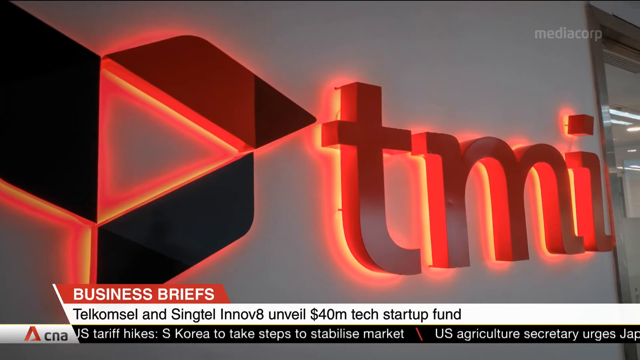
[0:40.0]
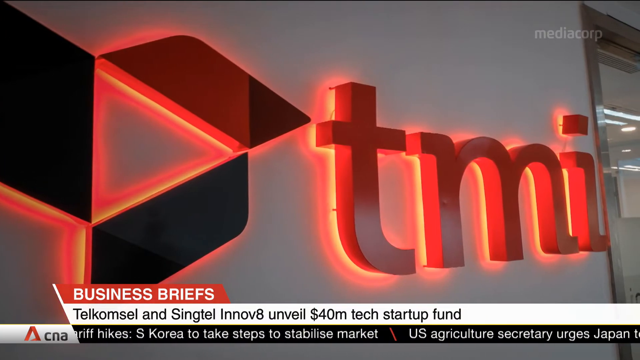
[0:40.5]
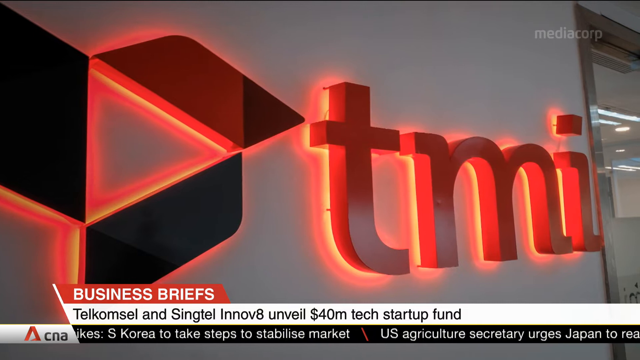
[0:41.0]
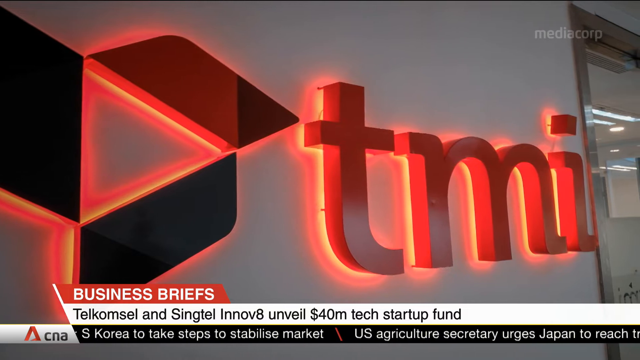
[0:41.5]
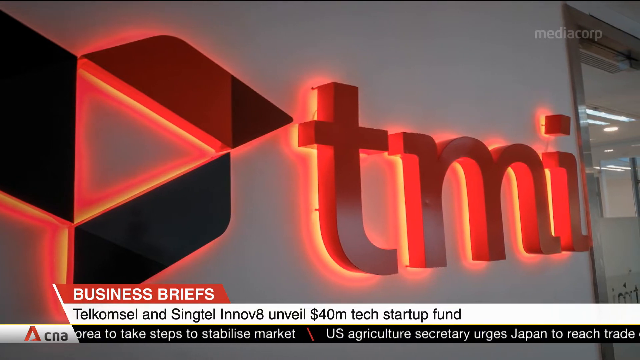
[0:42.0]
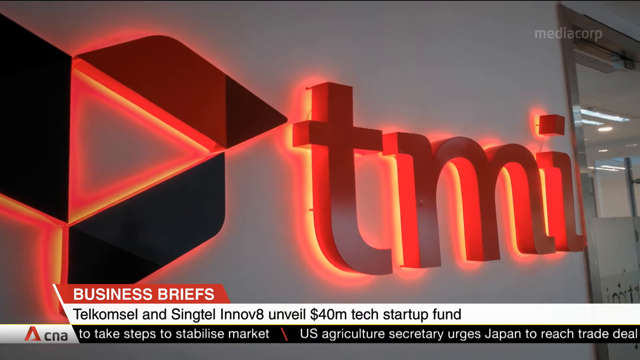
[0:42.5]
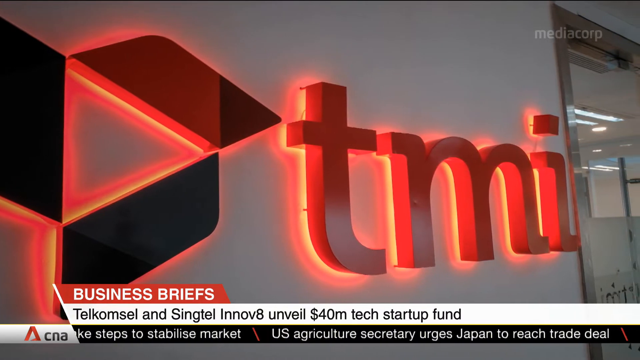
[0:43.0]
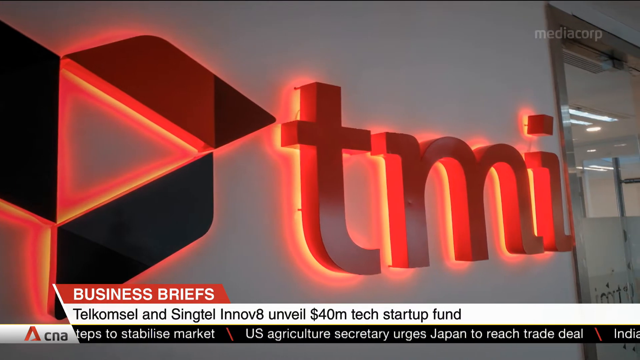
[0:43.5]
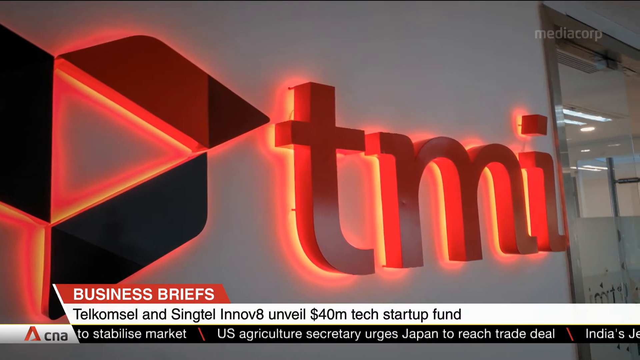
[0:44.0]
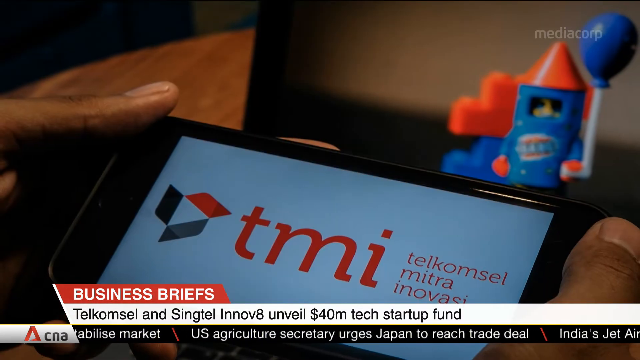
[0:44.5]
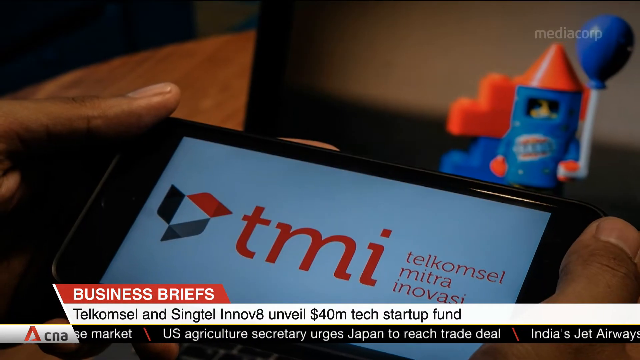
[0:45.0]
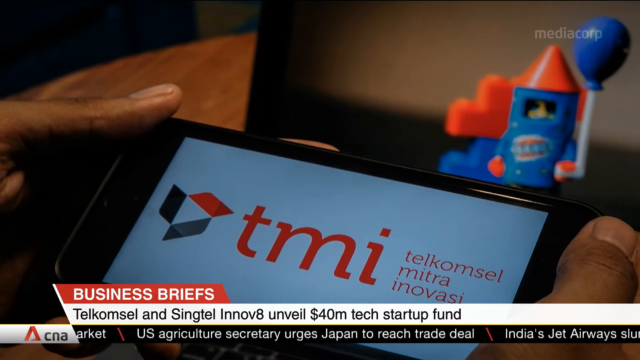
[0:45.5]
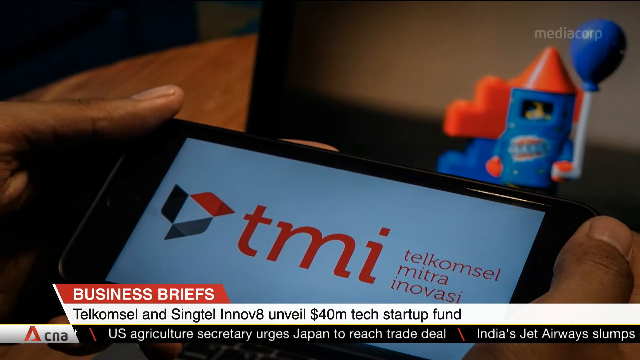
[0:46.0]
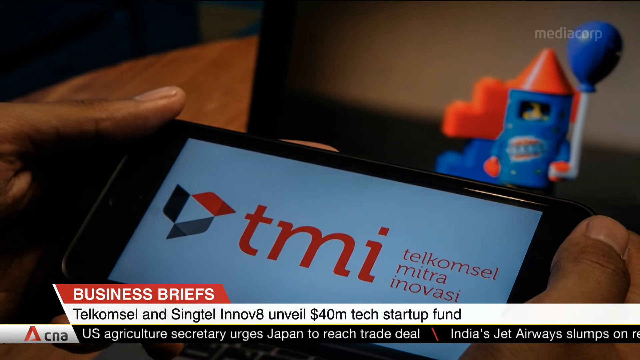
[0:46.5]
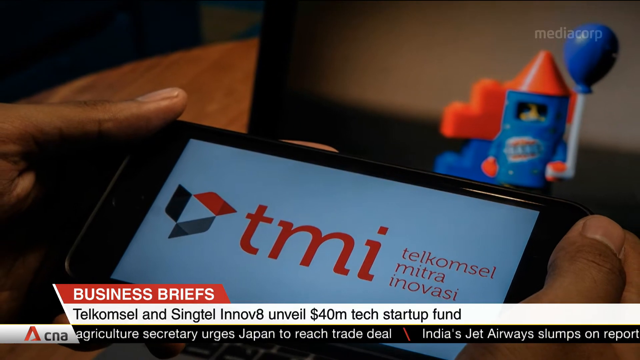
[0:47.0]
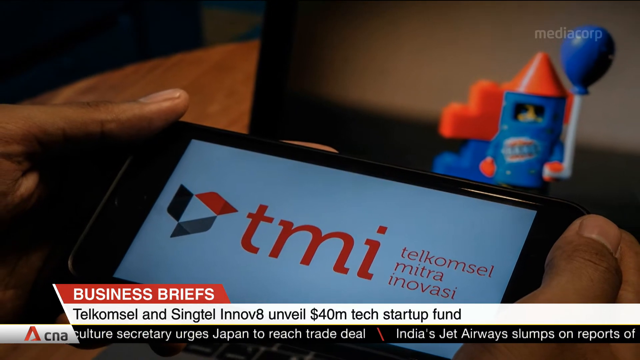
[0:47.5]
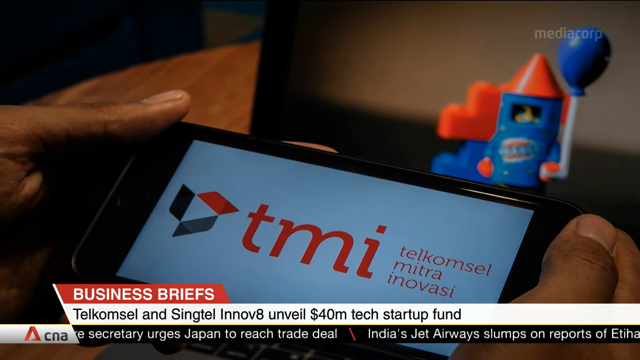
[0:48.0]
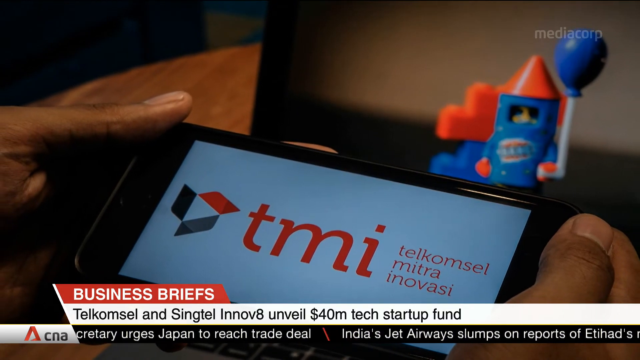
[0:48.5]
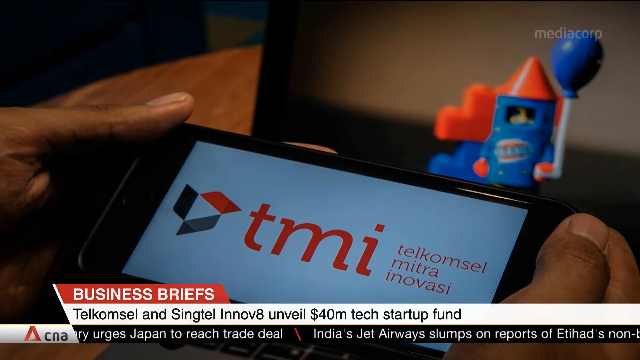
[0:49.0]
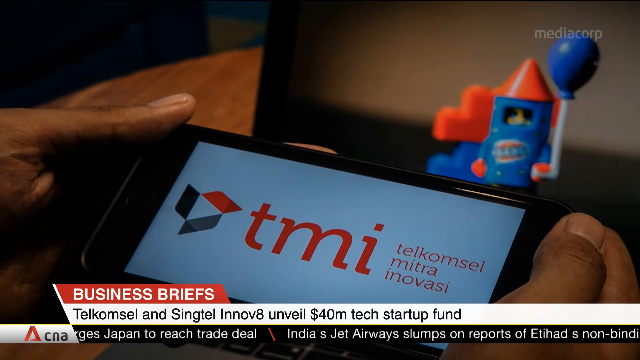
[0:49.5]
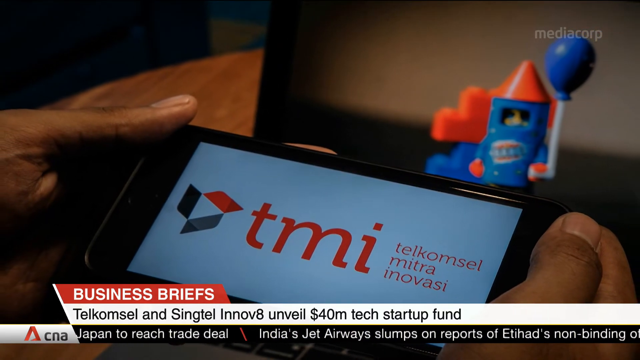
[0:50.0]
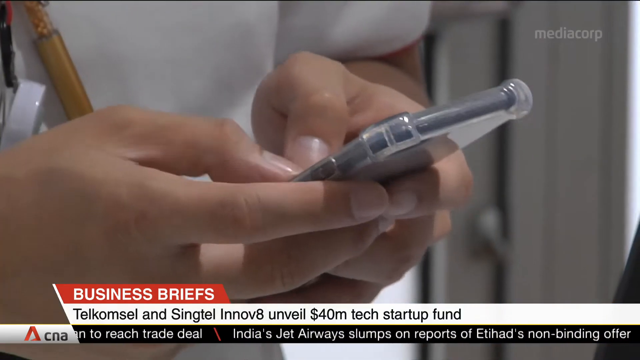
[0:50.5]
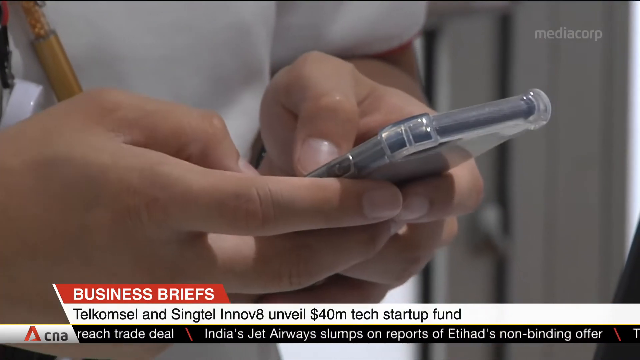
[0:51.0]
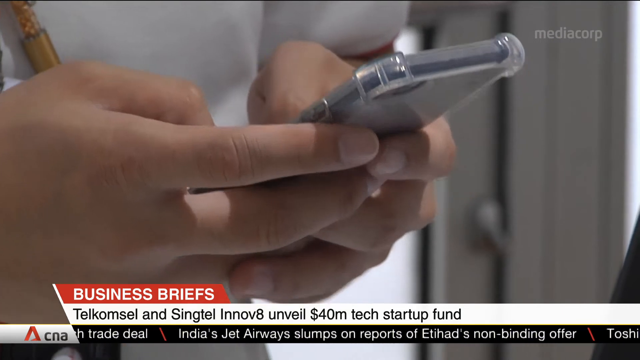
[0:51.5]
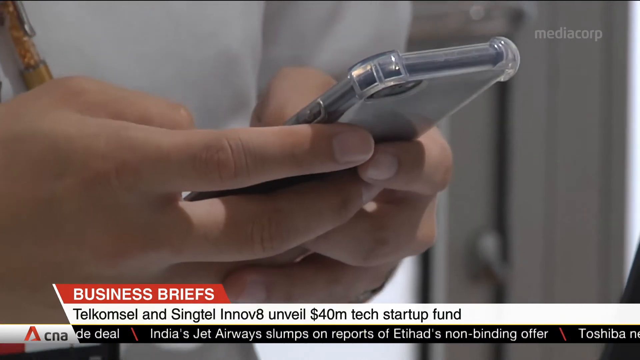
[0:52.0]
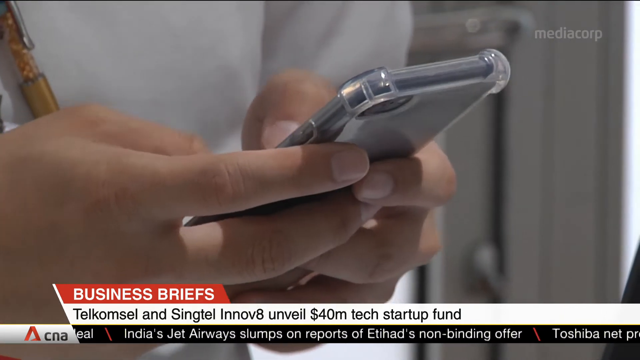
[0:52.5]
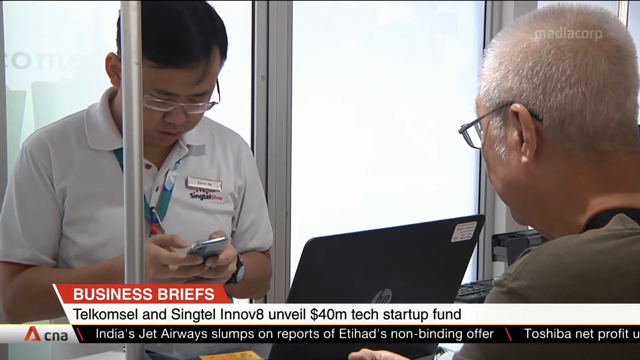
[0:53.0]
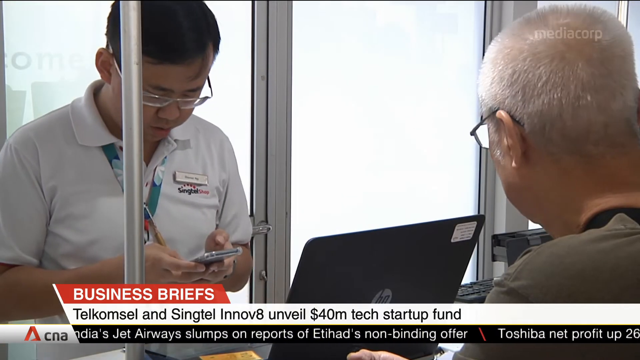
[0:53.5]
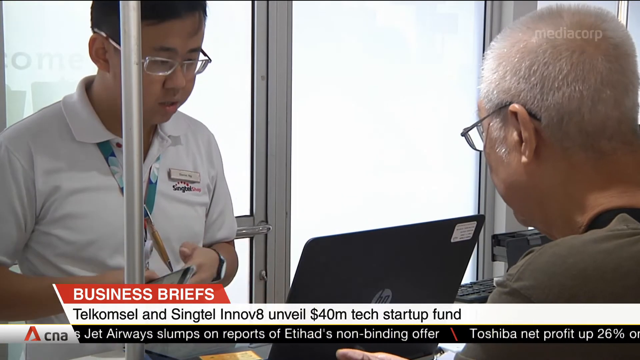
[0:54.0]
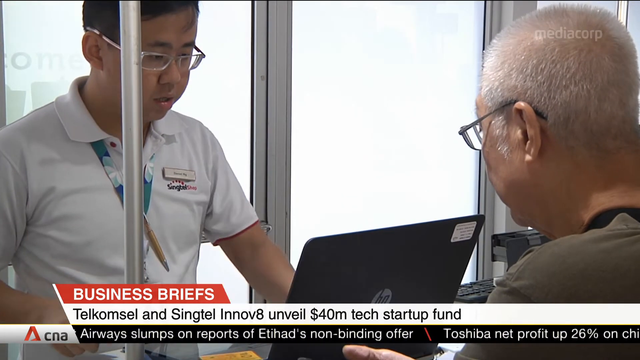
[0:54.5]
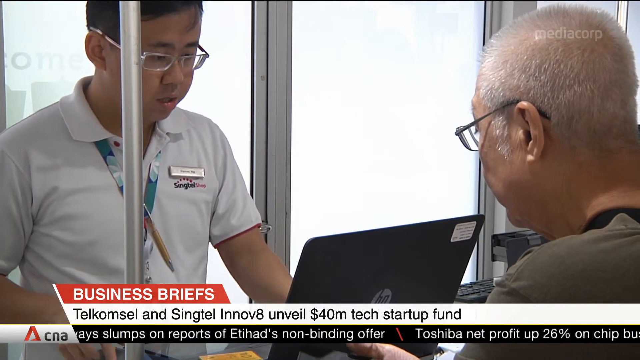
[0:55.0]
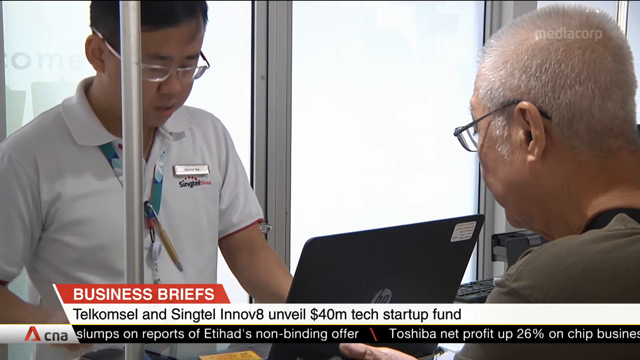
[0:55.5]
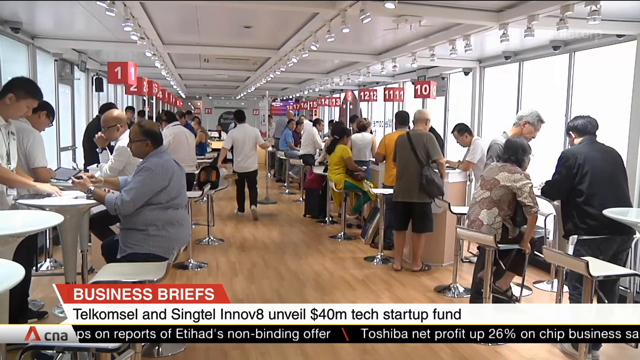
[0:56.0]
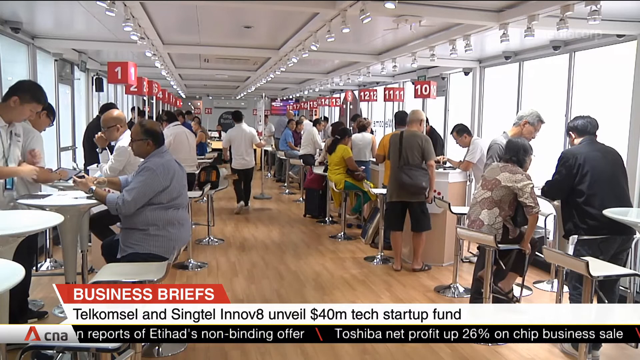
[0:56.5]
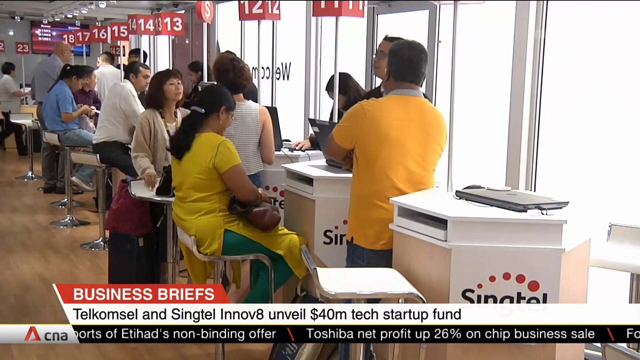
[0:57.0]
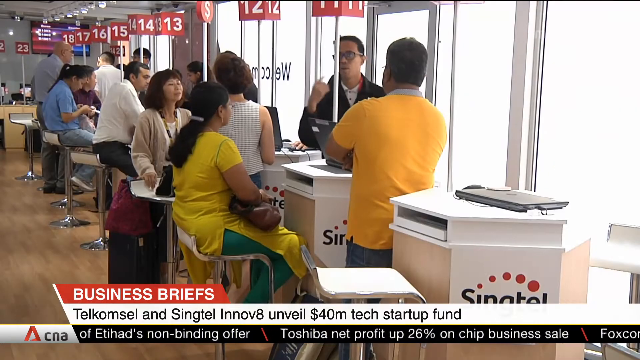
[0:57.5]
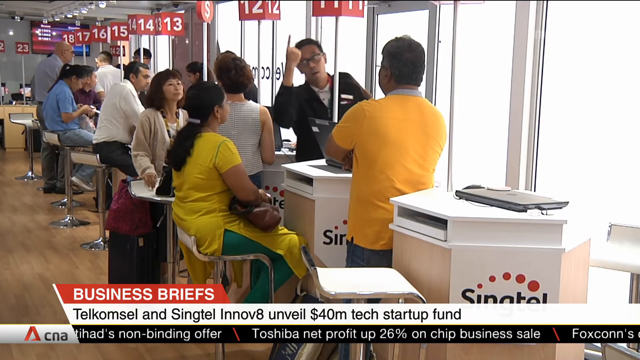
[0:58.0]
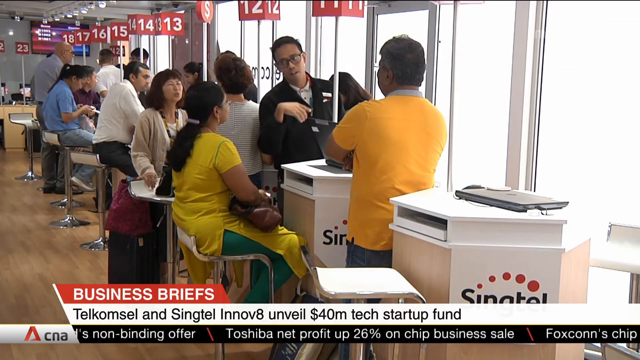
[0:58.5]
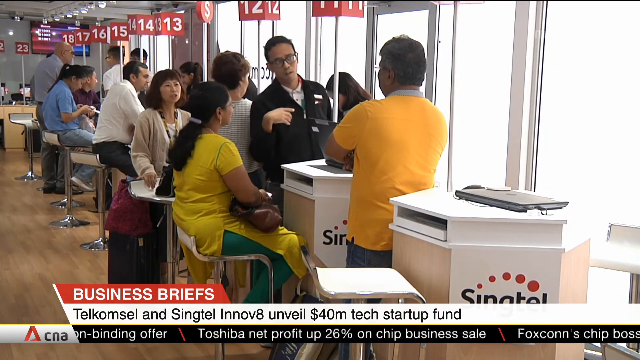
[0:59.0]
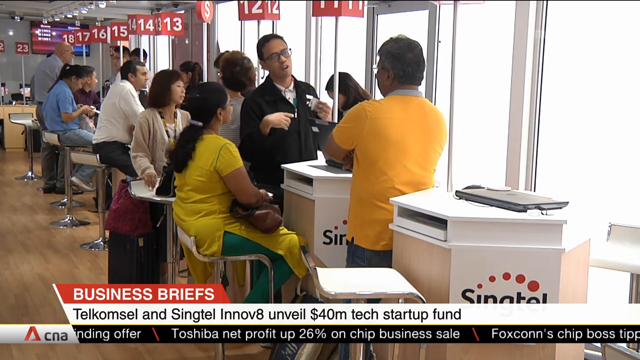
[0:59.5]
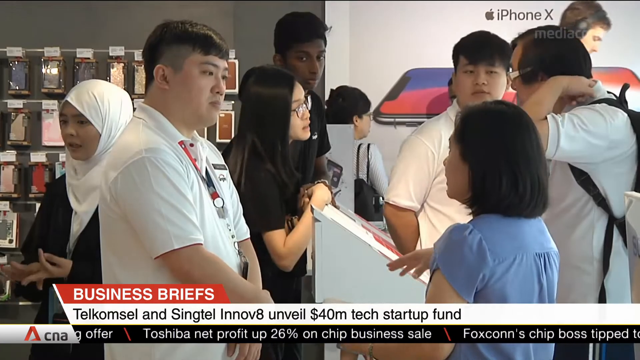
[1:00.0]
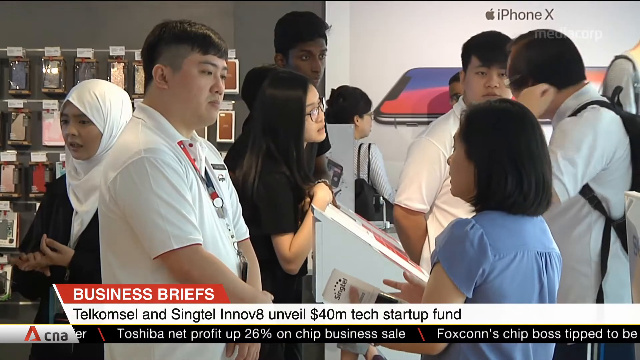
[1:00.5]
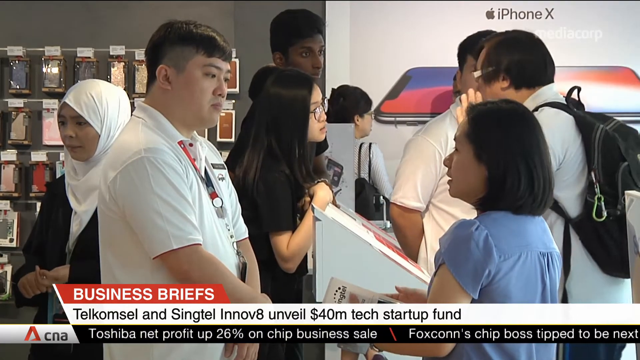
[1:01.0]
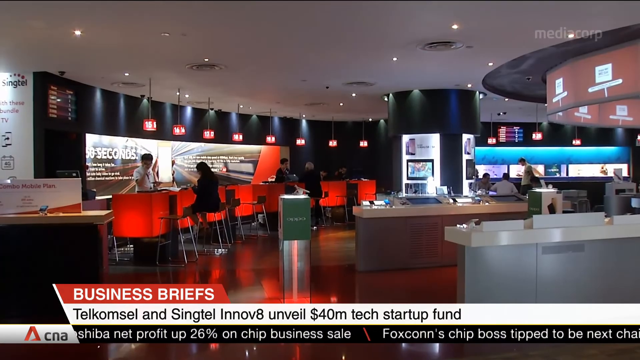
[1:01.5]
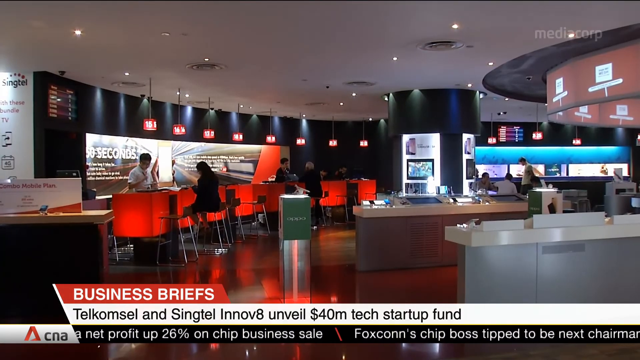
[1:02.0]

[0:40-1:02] The shot of the business with TMI outside pans slowly to the right. Then a shot zooms out from two hands holding a cell phone horizontally. In the background is a strange object, apparently a toy, that looks like a crayon with arms holding a balloon, with a couple of Lego-like blocks behind it. The video cuts to a man's hands holding a different cell phone, texting; he wears a white shirt and glasses and looks Asian. An HP laptop is in front of him, and behind the laptop is an older man with glasses, seen only from the back of his head. The video cuts to what must be the inside of the TMI place, where lots of people stand at different tables, apparently mostly customers talking with company representatives. Each table has a pole coming from the middle with a different number at the top. Another shot shows people sitting at these tables talking to people, and the shots cut a few times. Finally the video cuts to what looks like a very nice-looking bar, much darker than the previous shot and possibly part of the same establishment, with orange chairs and odd lighting that keeps it dark but illuminated where light is needed.